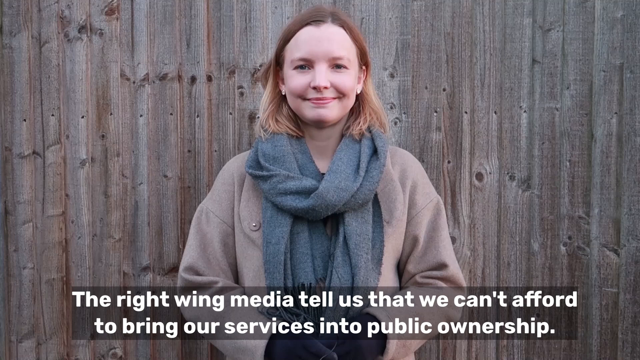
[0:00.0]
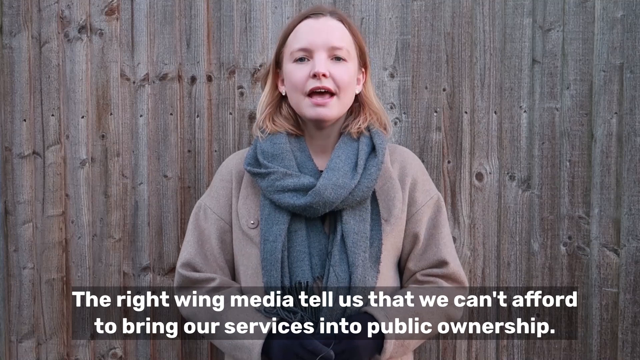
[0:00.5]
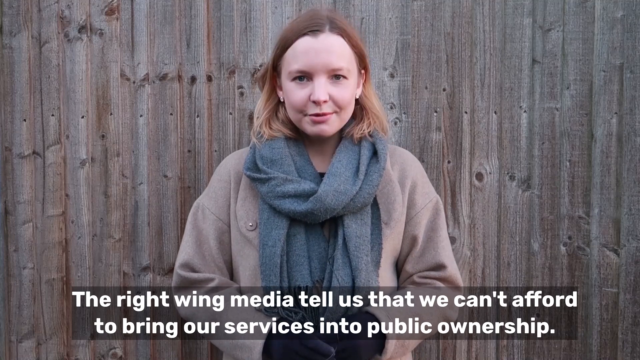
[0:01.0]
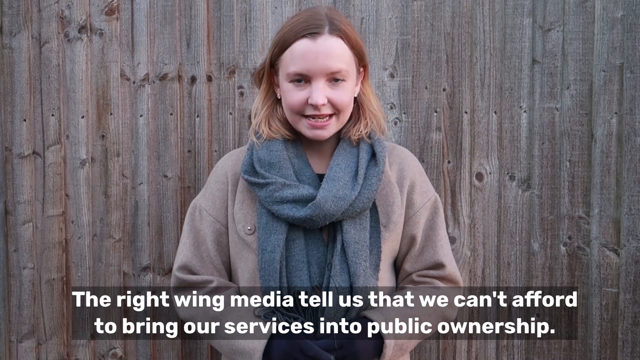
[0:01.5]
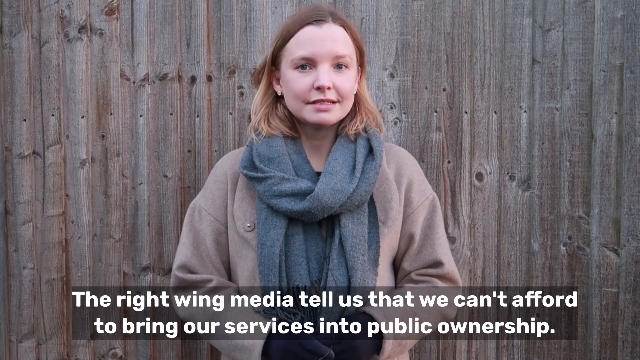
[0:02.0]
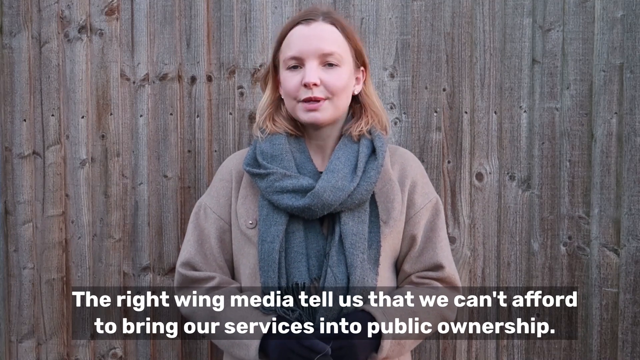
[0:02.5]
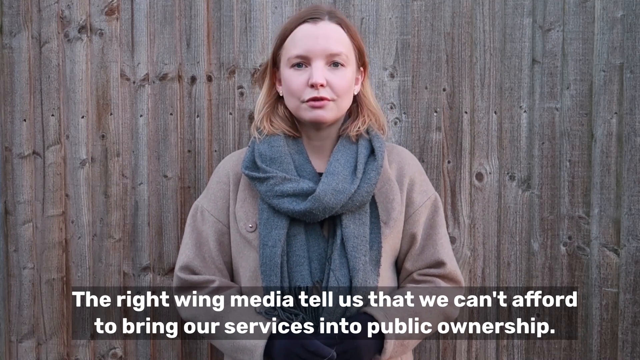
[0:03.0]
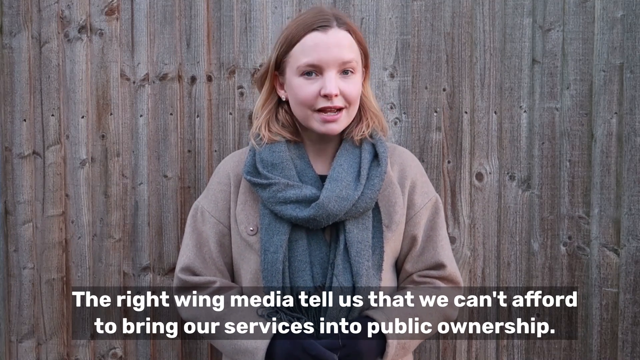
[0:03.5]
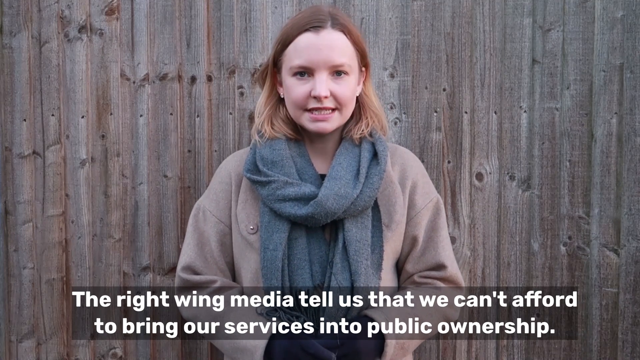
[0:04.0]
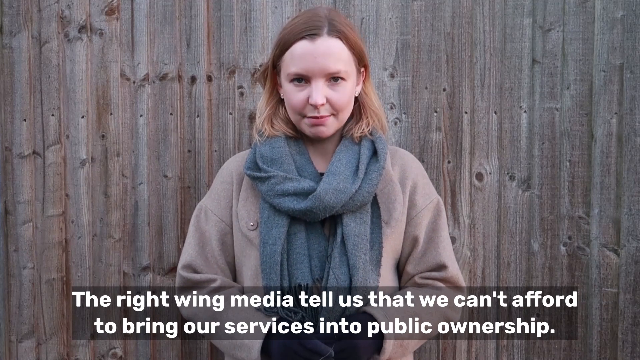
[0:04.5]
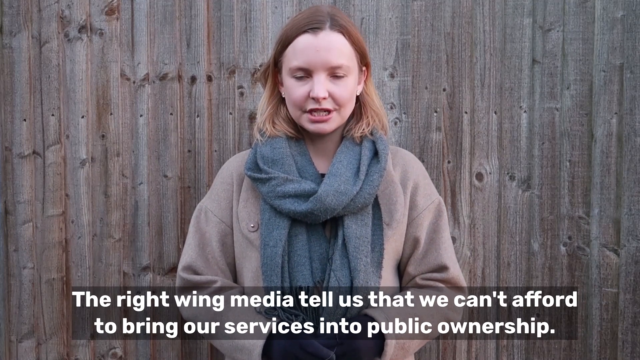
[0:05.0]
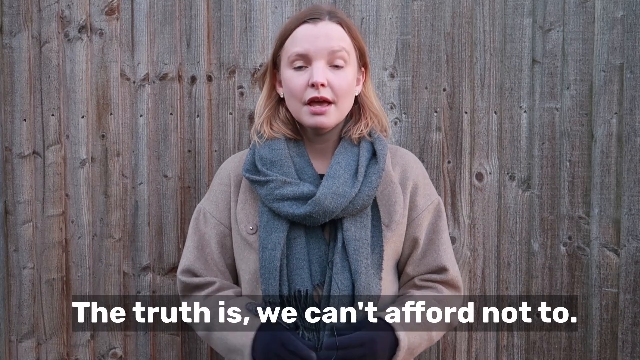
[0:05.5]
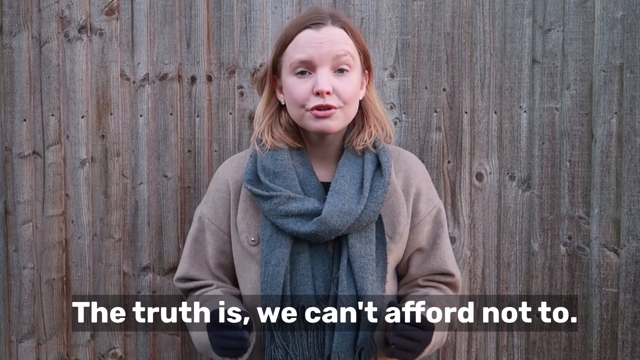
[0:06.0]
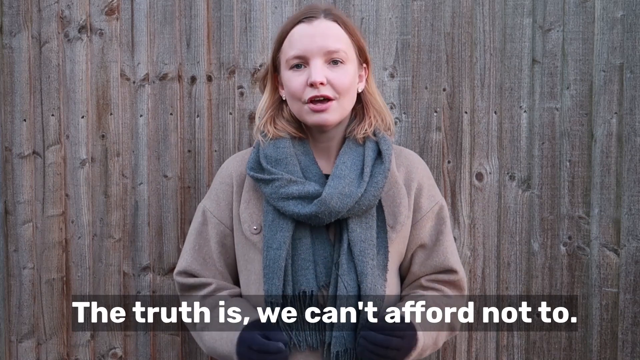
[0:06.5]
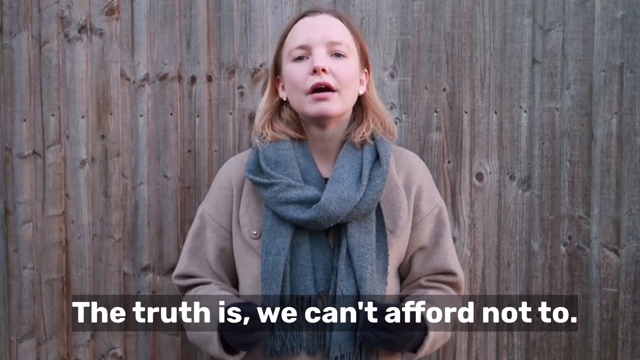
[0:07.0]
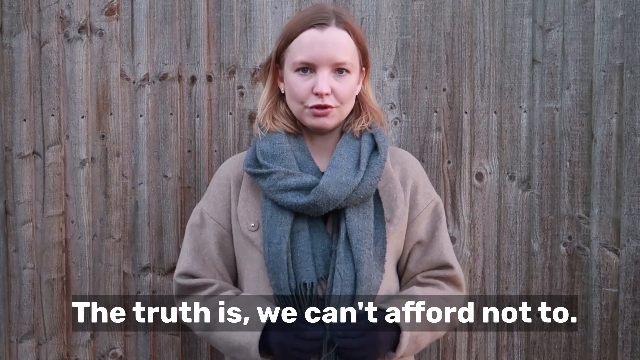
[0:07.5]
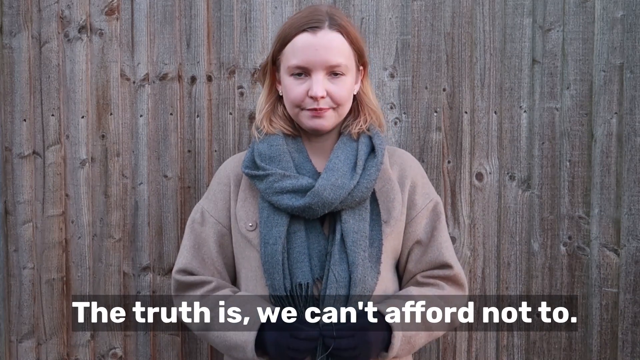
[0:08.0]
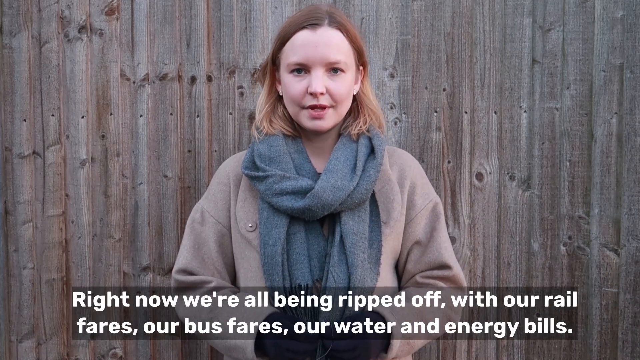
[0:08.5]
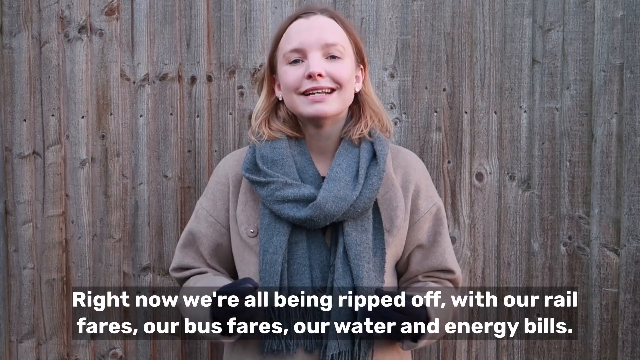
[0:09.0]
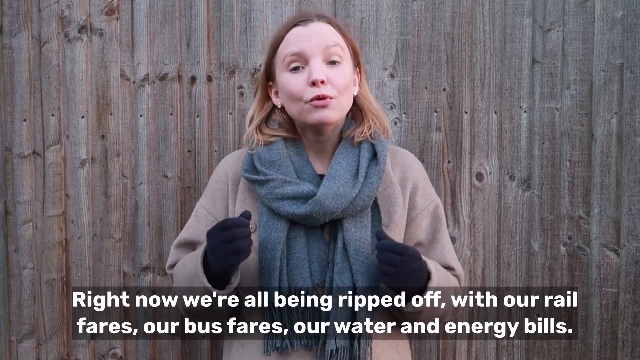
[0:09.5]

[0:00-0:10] A woman wearing a jacket and a gray scarf stands against a fence. She has shoulder-length blonde hair and wears silver earrings. It looks like it might be a little chilly outside. She is talking and seems very passionate.